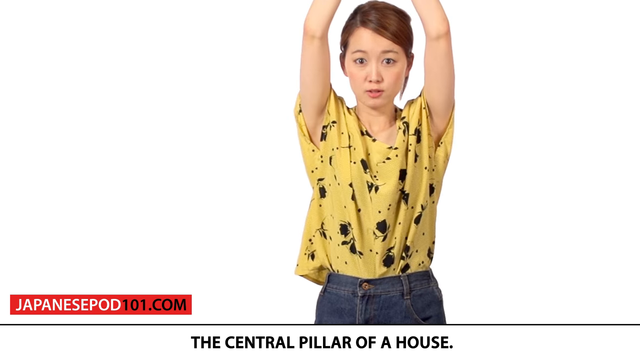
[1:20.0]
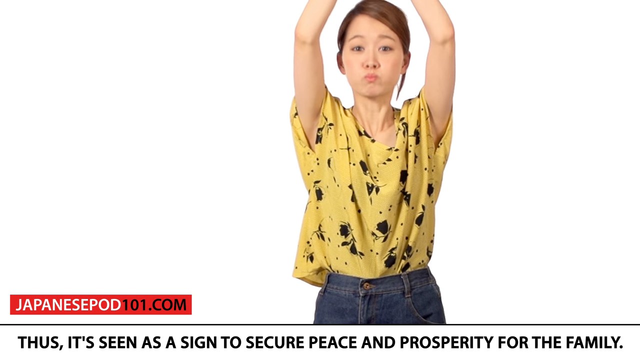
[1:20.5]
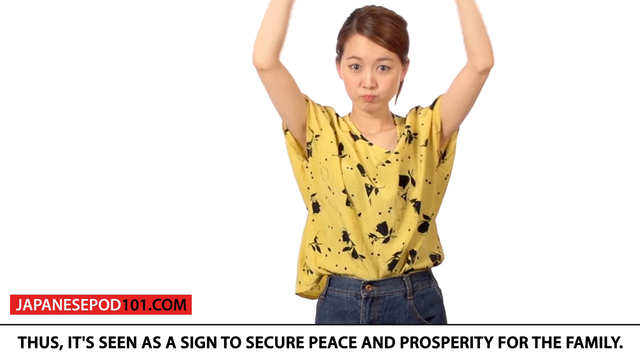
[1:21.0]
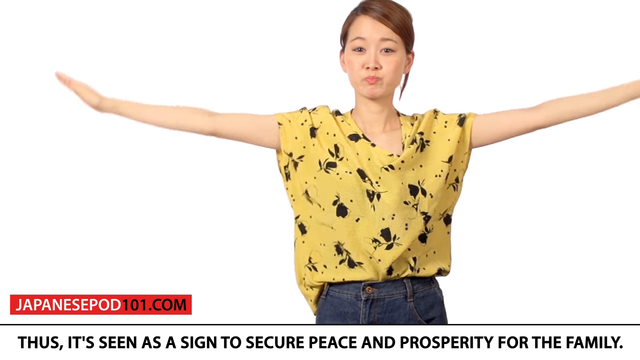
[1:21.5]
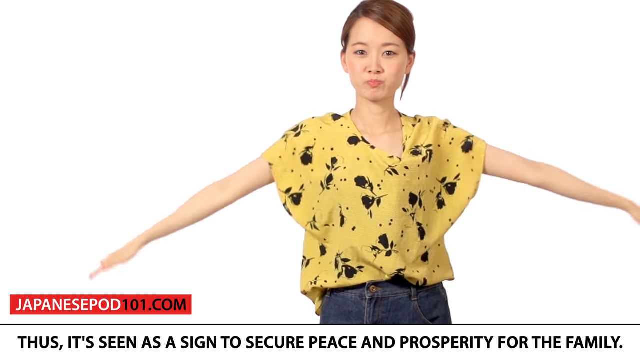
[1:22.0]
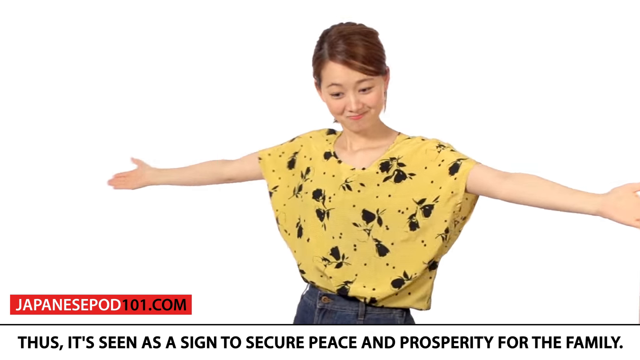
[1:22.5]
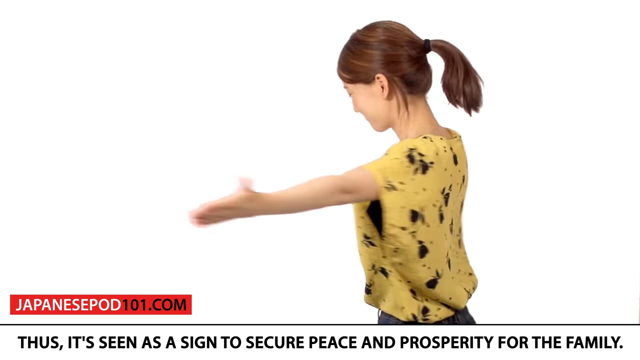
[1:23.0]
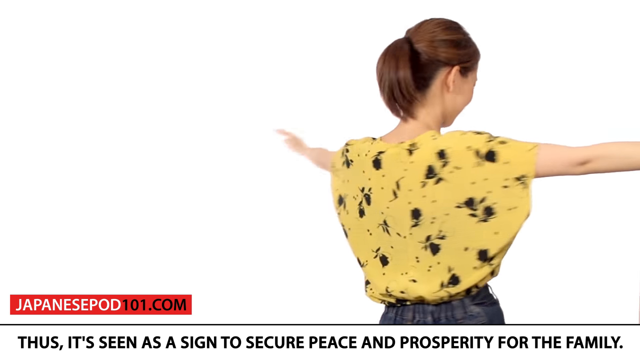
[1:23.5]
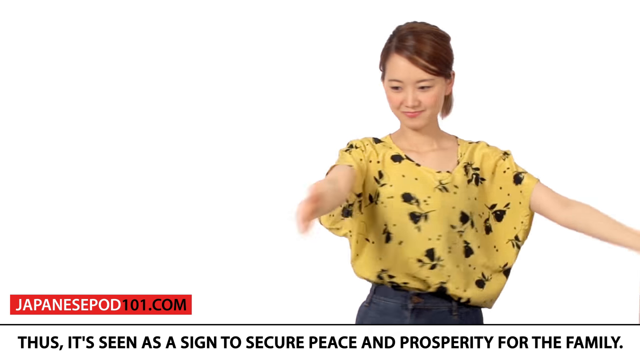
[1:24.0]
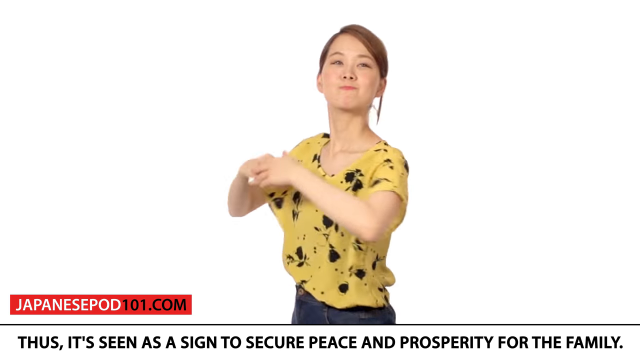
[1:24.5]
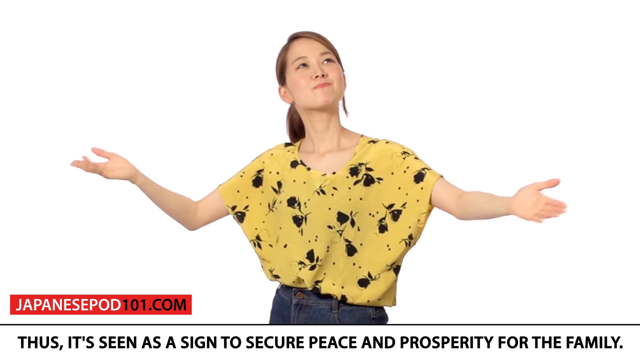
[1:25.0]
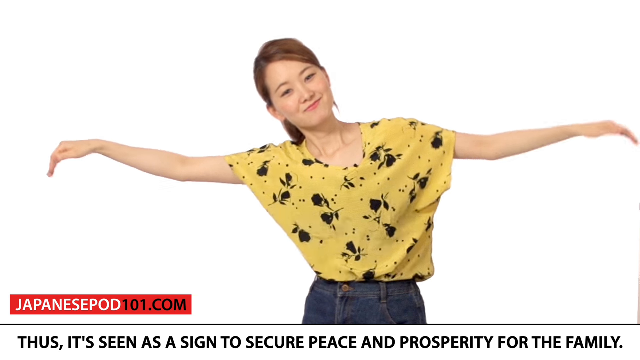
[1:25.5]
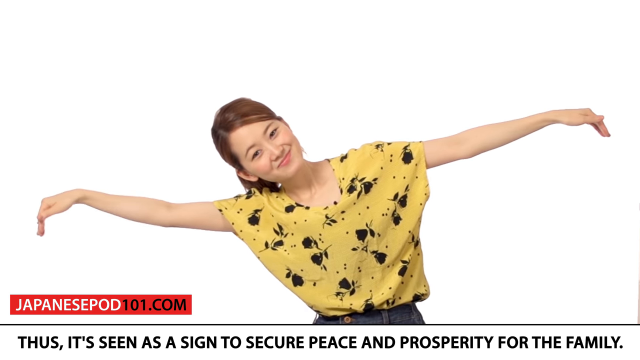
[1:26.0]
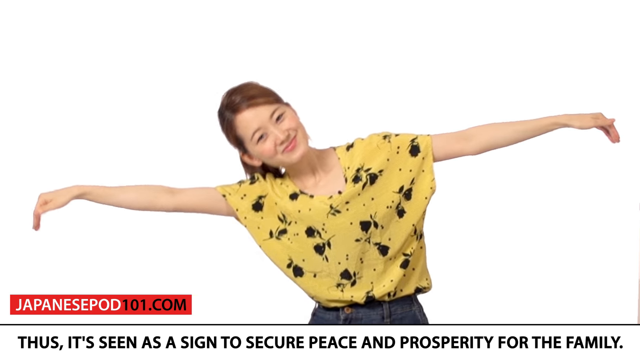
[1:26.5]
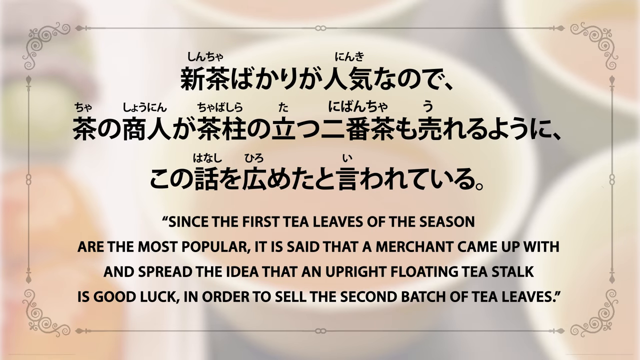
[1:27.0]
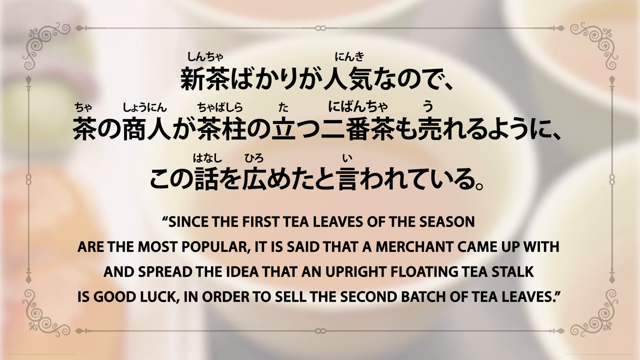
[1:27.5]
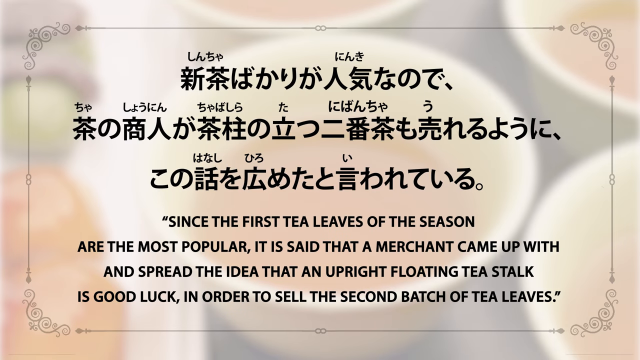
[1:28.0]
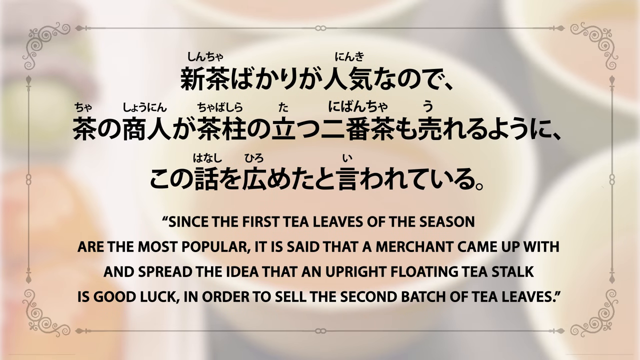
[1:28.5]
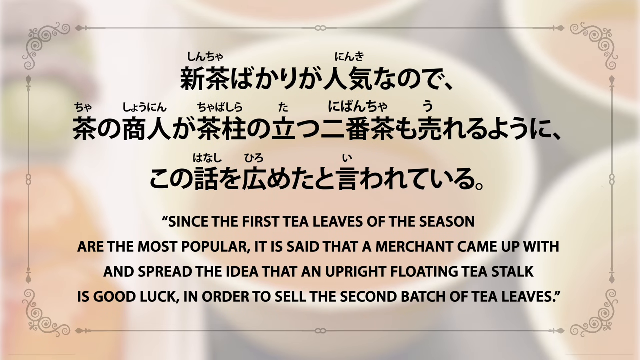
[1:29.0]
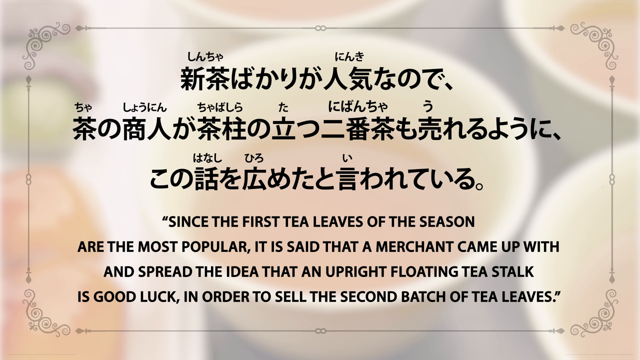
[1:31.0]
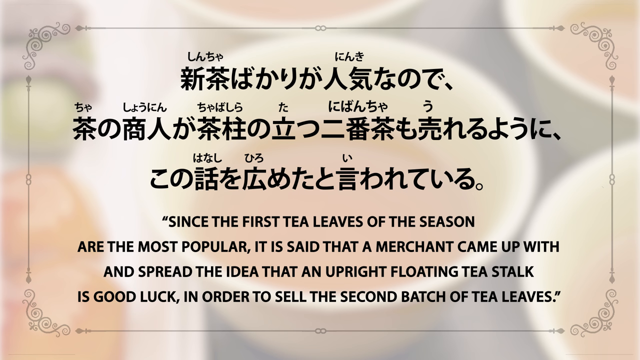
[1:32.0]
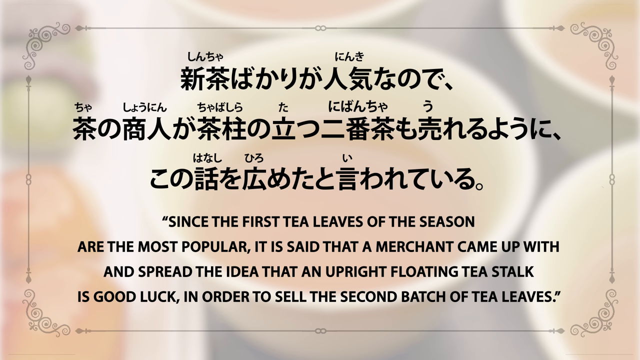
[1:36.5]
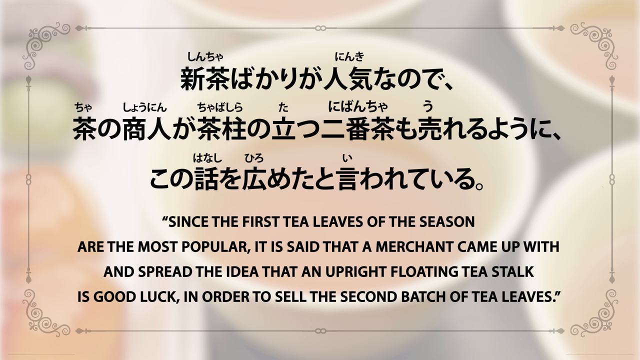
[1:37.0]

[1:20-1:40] The Asian woman with brown hair and brown eyes, in a yellow t-shirt with flowers and blue jeans, dances. Text at the bottom of the screen says it is "seen as a sign to secure peace" for the family. Another slide appears with Japanese text translated into English, beginning "since the first leaves of the season are the most popular it is said that a merchant came up", and the woman apparently explains this text.